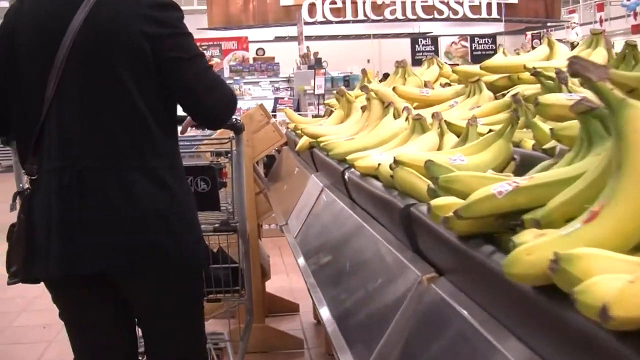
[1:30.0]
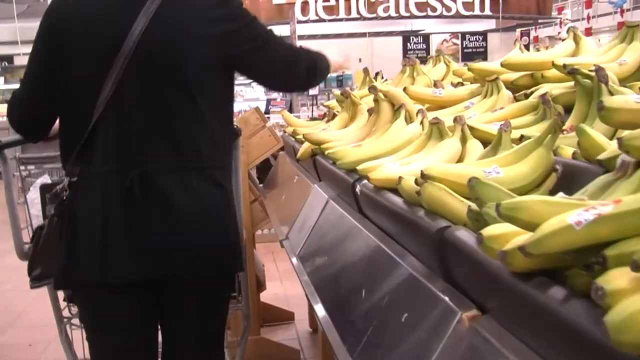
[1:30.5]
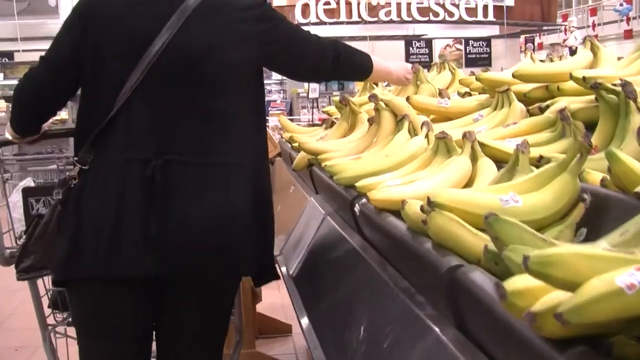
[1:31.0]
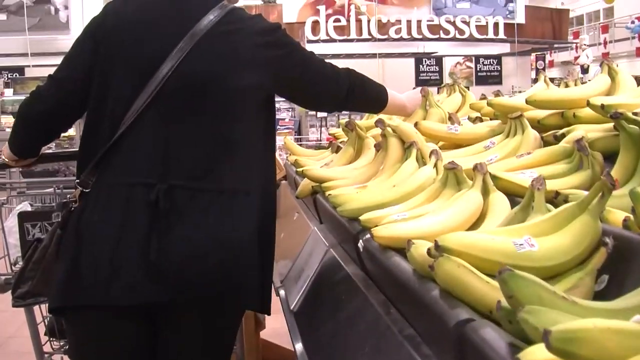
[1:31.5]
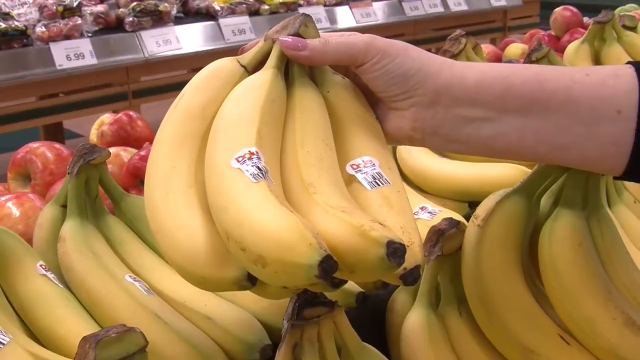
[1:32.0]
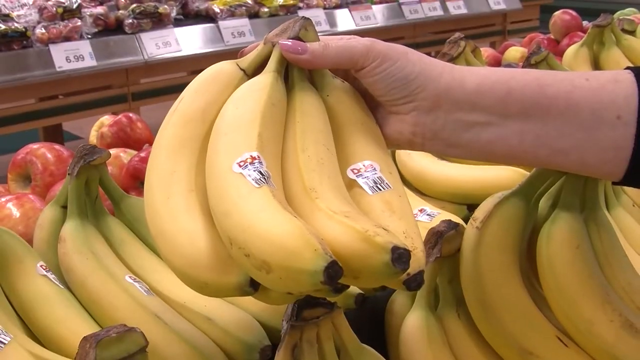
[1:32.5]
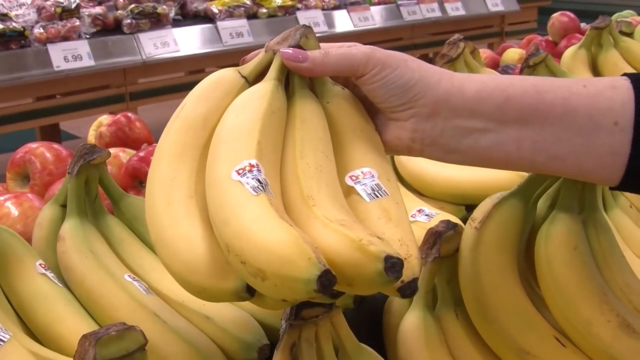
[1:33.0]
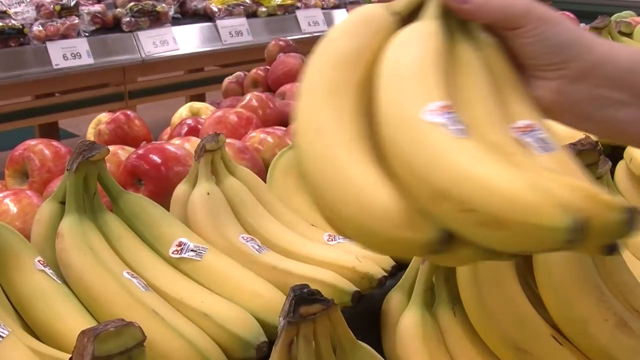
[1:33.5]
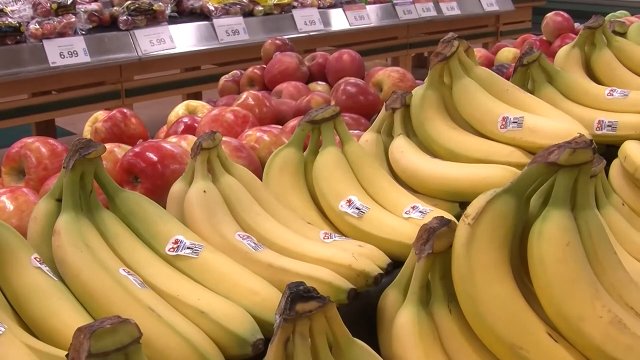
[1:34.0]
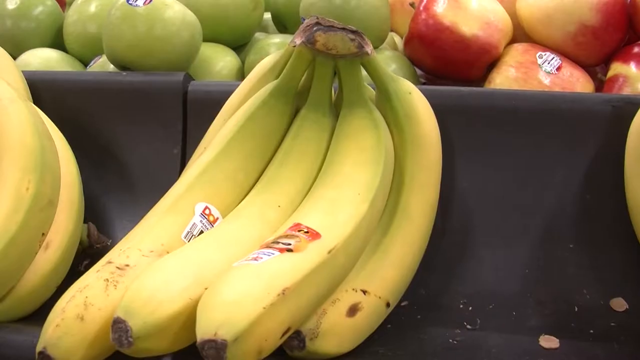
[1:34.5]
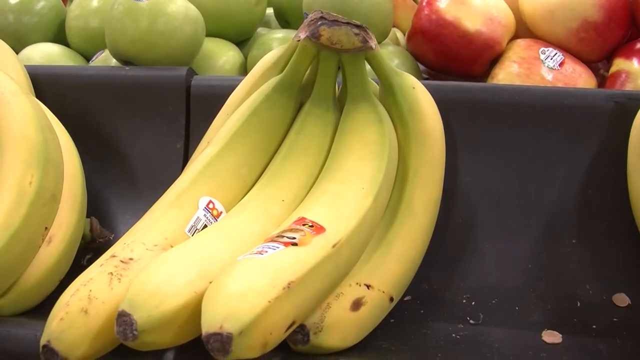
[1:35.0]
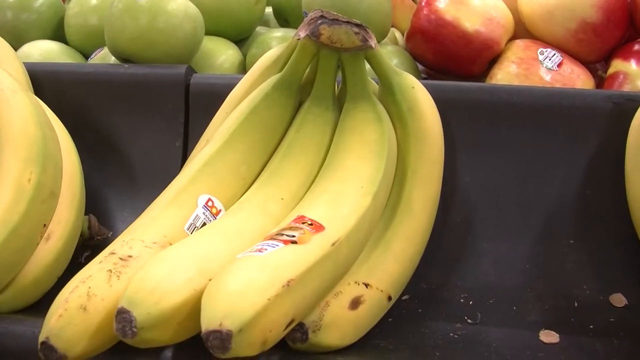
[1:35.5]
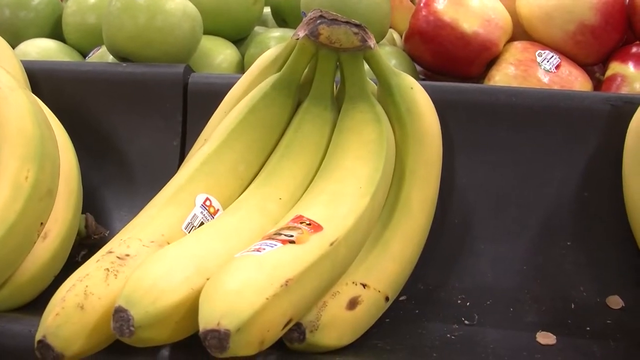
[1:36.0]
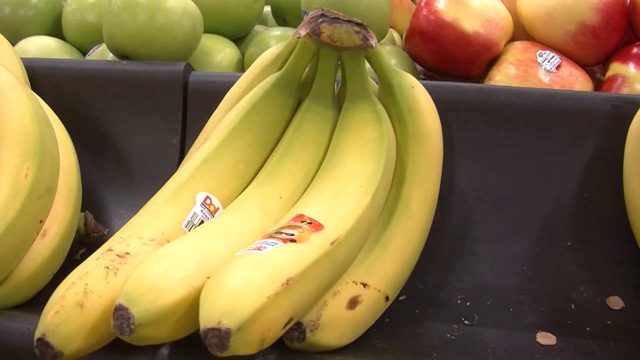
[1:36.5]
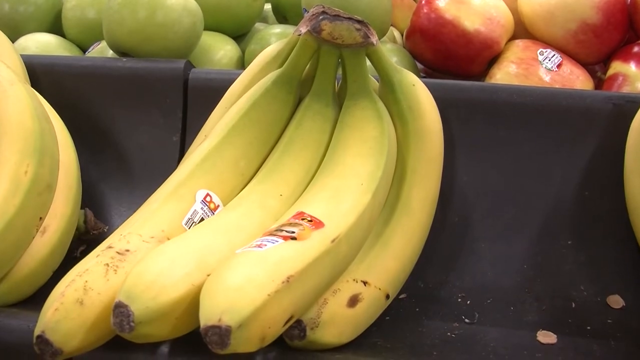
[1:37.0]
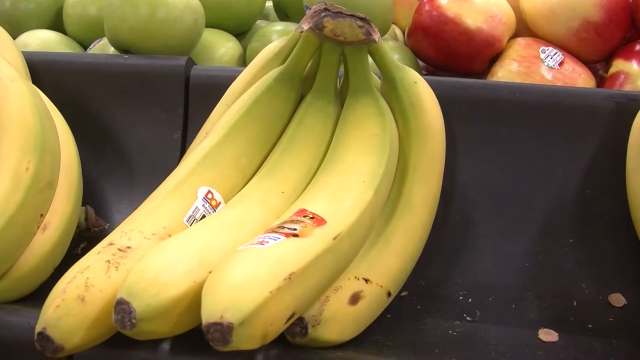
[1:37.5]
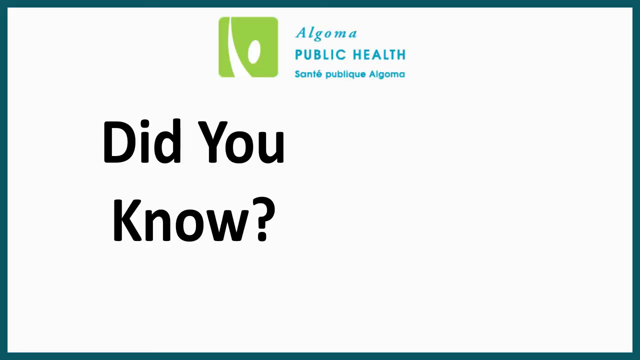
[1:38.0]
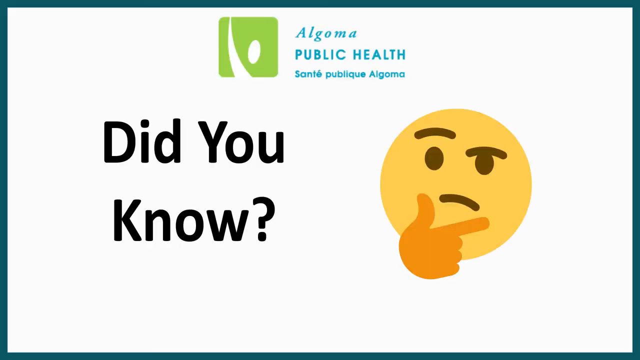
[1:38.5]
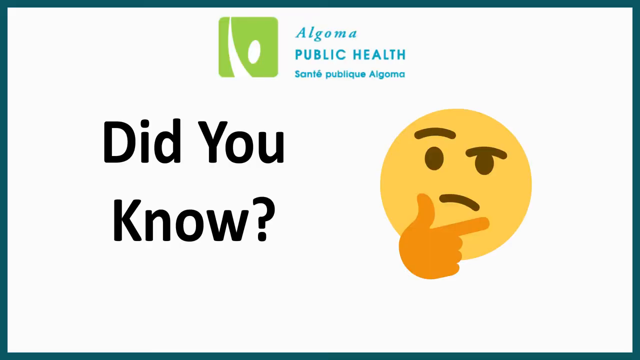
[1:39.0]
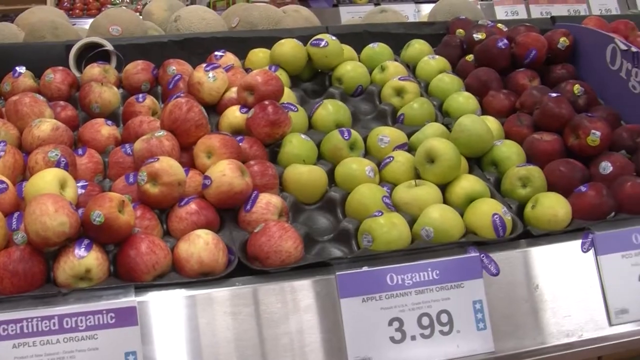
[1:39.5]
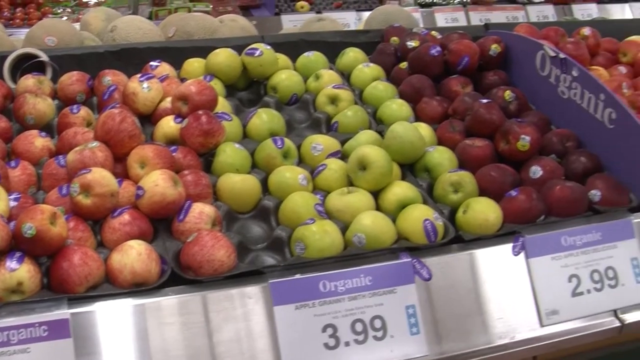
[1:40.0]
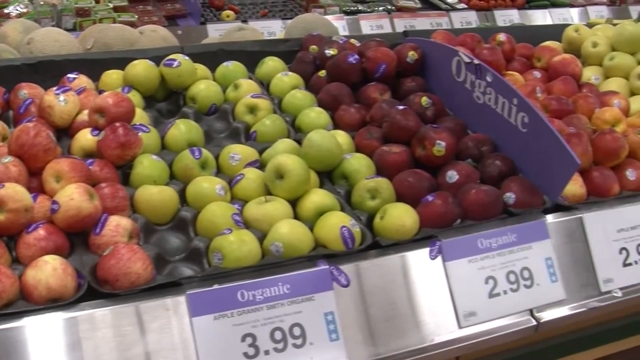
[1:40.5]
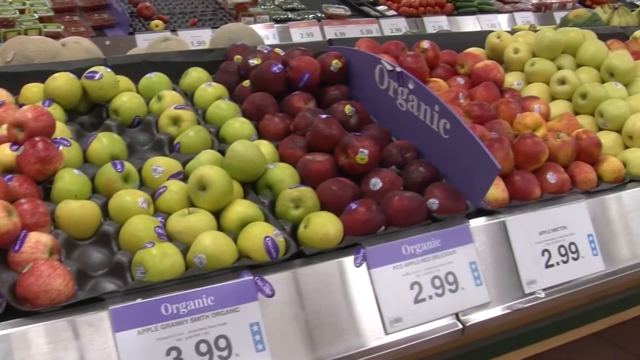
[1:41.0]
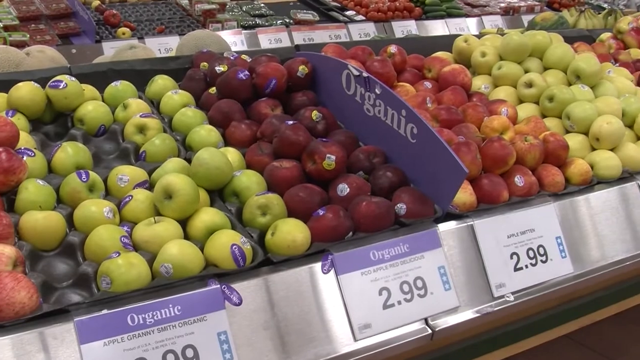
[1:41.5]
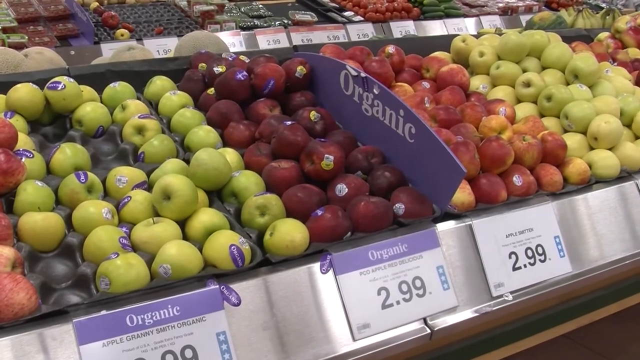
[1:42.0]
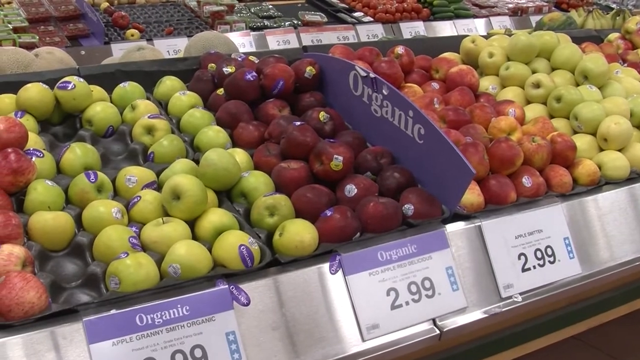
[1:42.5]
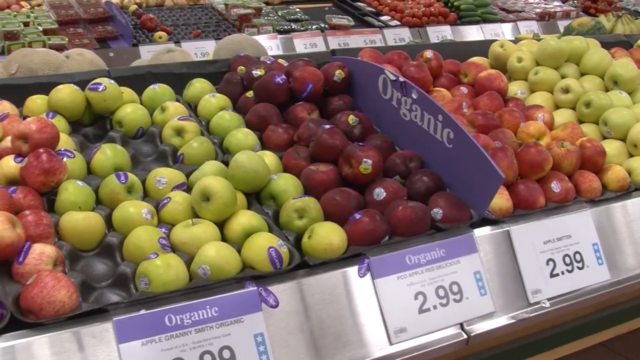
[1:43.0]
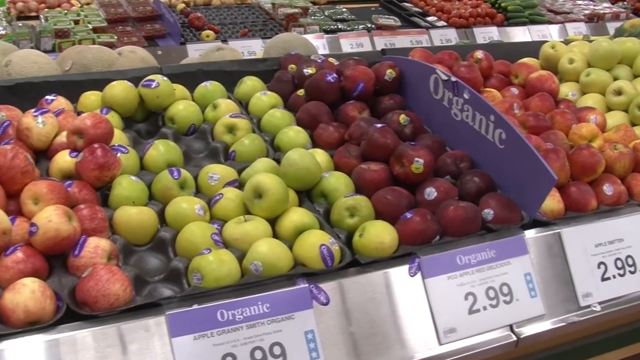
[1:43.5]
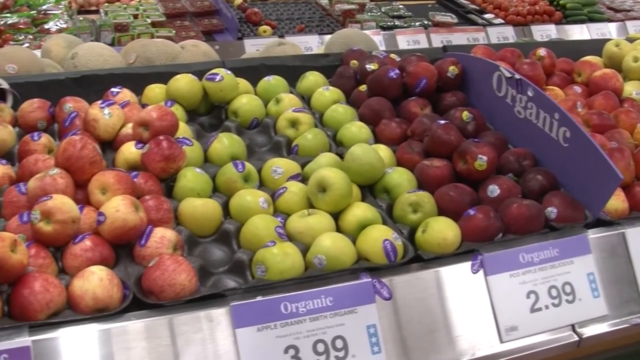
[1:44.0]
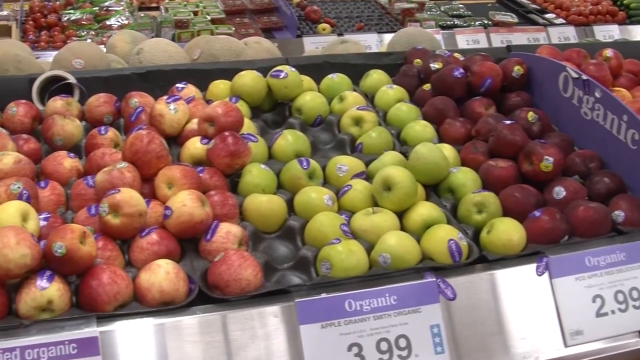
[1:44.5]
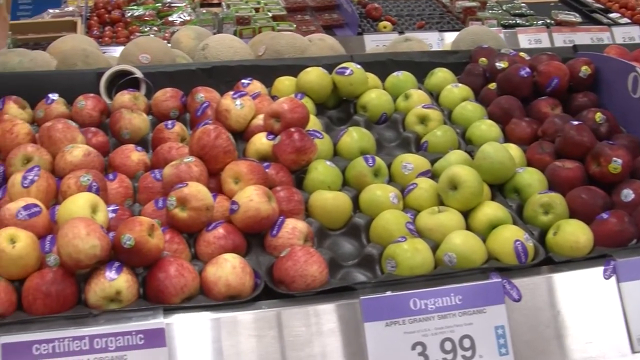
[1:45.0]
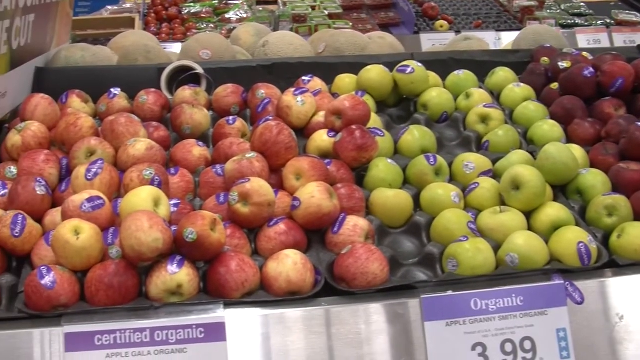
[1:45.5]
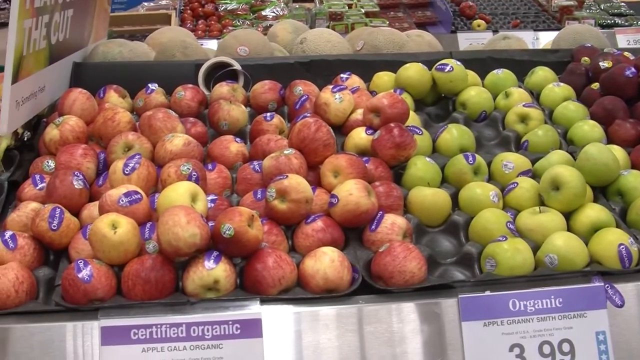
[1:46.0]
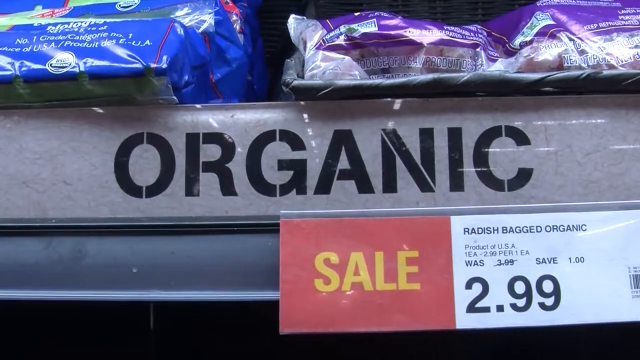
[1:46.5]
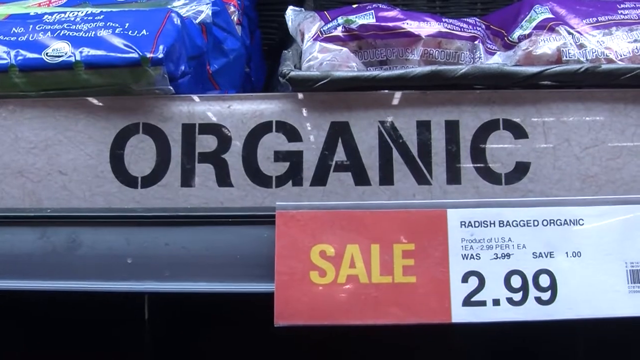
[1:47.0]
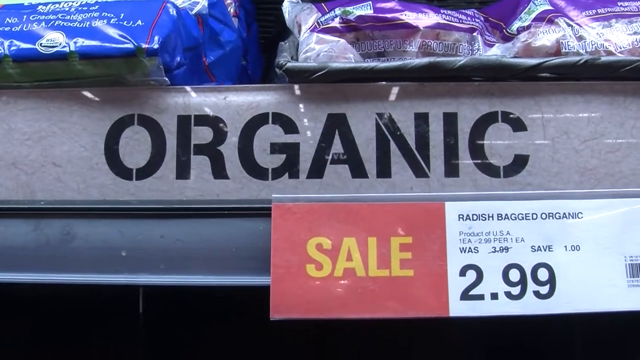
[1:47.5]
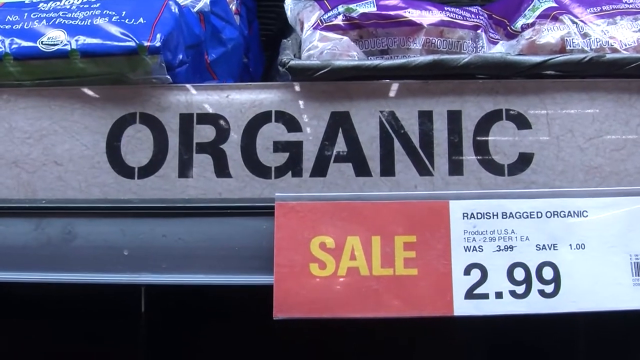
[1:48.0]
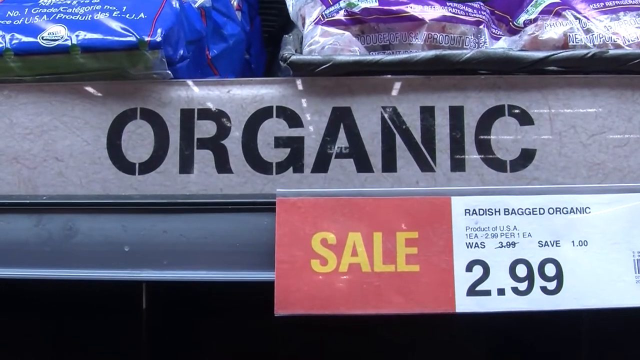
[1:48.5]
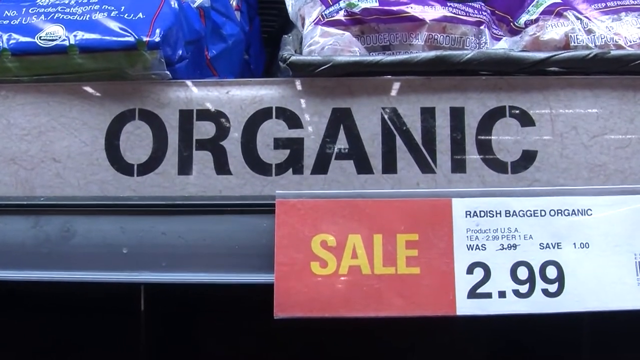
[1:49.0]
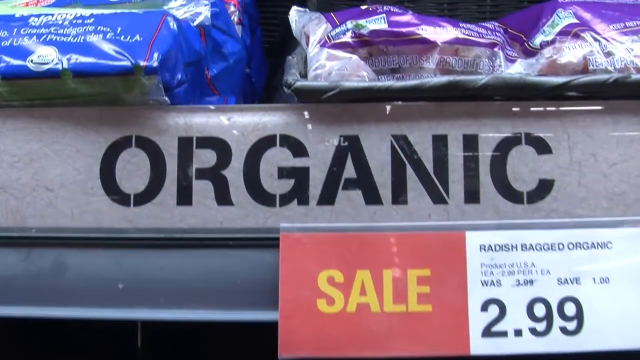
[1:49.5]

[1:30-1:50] A woman walks behind a grocery cart wearing a long-sleeve black blouse, with a brown purse around her hip. She walks along a fruit aisle with a large number of bananas and reaches toward them with her right hand. The shot changes to a direct view of her holding a bundle of bananas; she has pink fingernails and looks at the Dole brand stickers on the front of the bananas. The camera lingers on the bananas as she moves the bundle over, then shows another bundle of bananas sitting on the aisle. Next comes a graphic illustration: a white background with a turquoise banner around it. At the top center left is a green logo with a white slope illustration and a circle, and next to it bluish turquoise text reads "Algoma Public Health". On the center left, black lettering reads "Did you know?", and on the right an orange emoji with a puzzled expression holds a hand over its chin as if contemplating something. The view returns to the store over a fruit stand, with yellow and red apples on the left, green apples in the center and a variety of other fruits on the right that appear to be peaches and pears. An organic label is in between a number of the items. The camera pans to the right and back to the left over the apples, then zooms in on the organic label, which shows "radish bagged organic" at "$2.99" on sale.